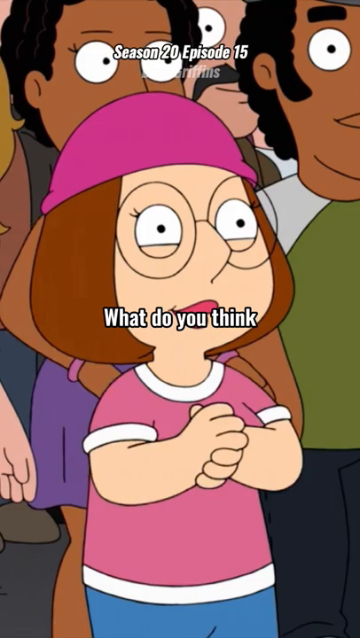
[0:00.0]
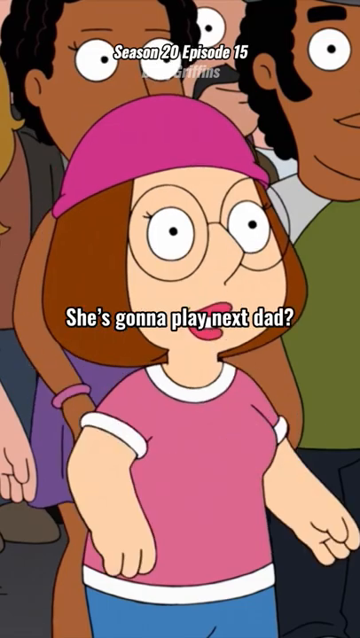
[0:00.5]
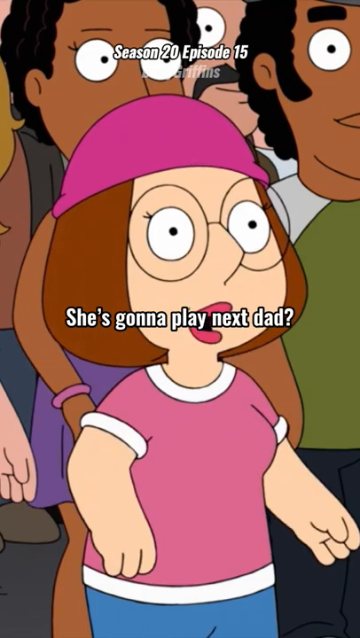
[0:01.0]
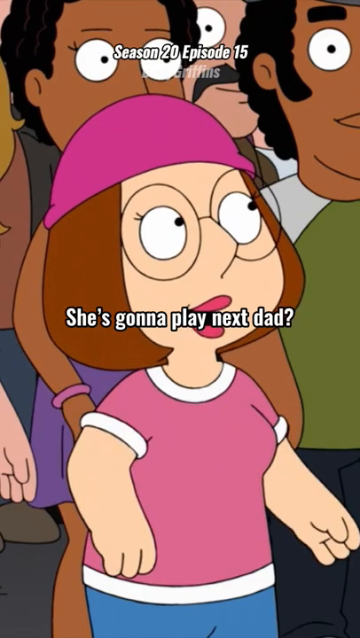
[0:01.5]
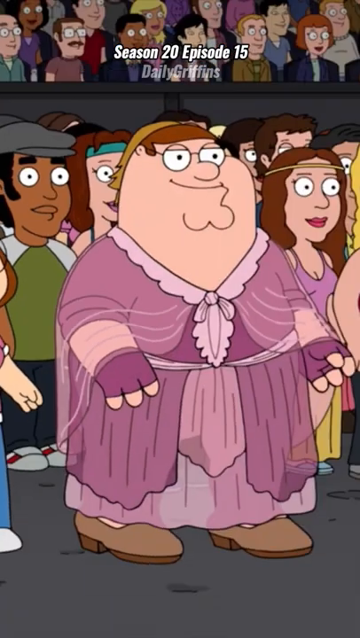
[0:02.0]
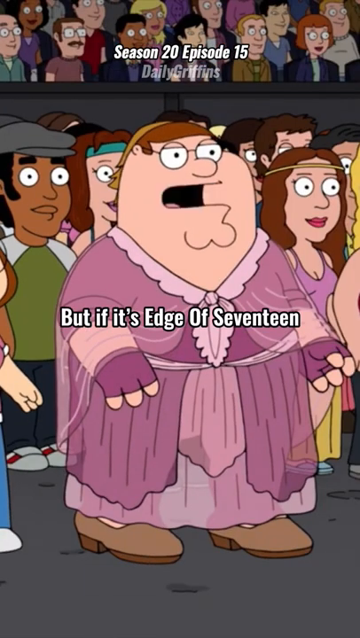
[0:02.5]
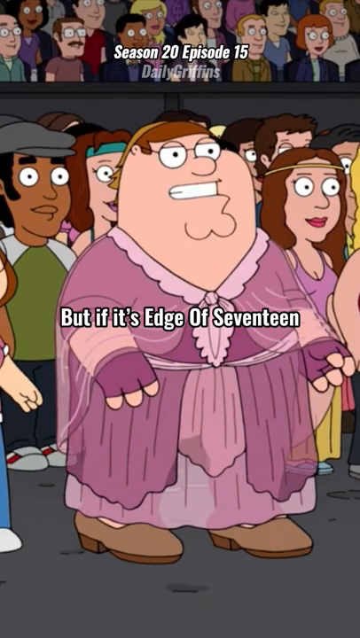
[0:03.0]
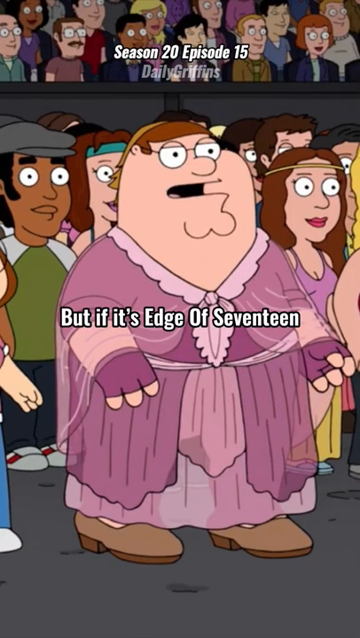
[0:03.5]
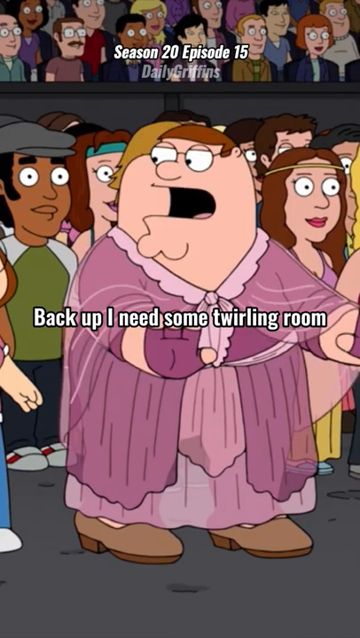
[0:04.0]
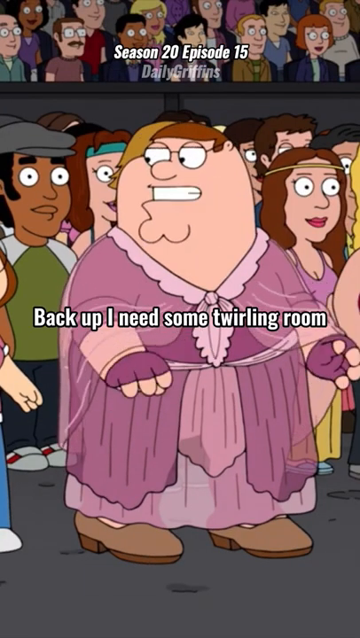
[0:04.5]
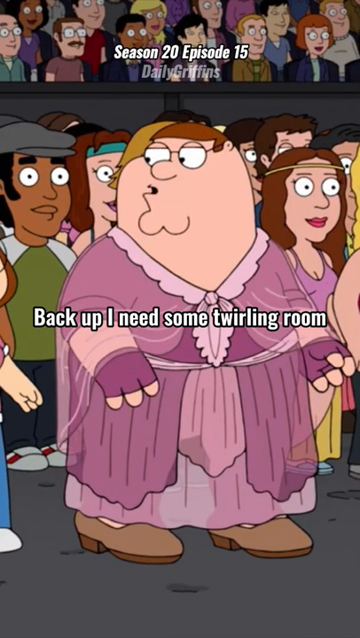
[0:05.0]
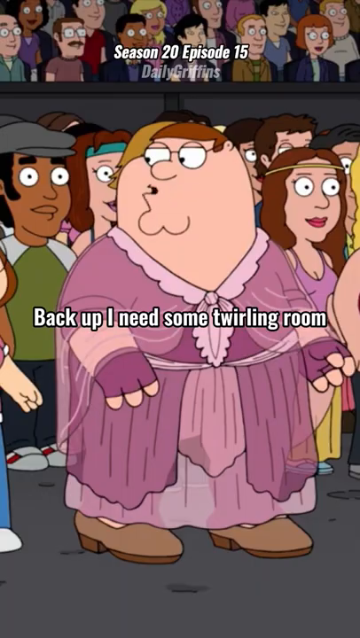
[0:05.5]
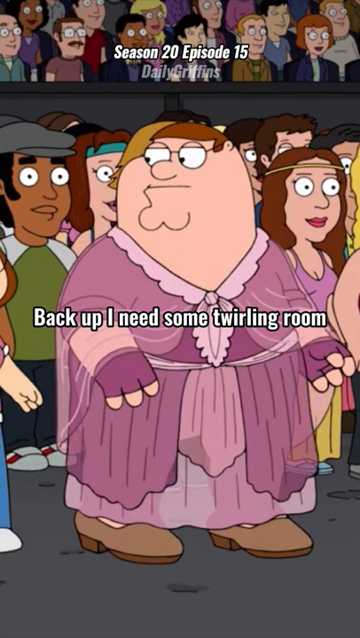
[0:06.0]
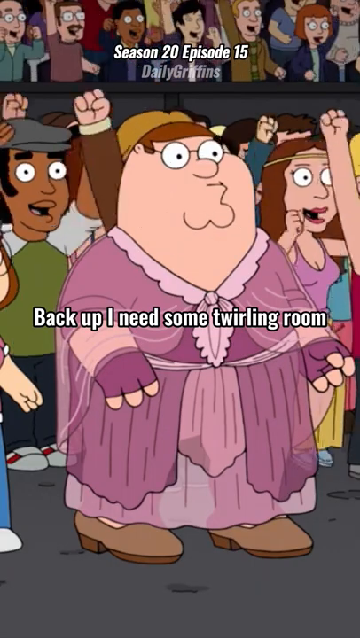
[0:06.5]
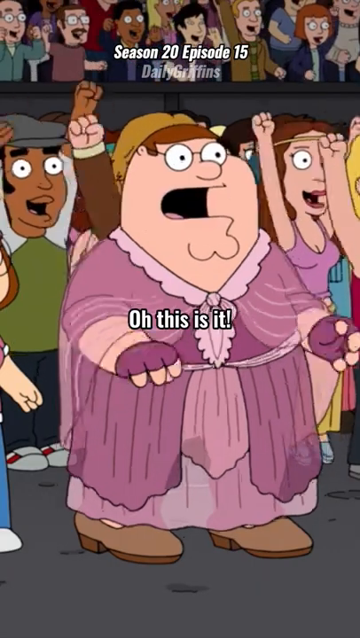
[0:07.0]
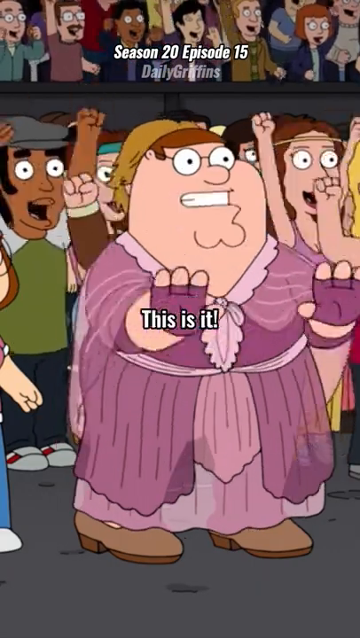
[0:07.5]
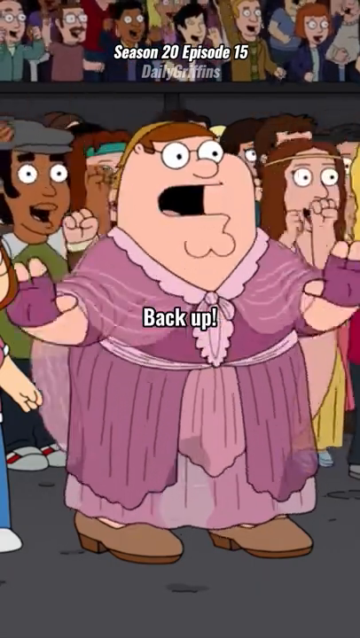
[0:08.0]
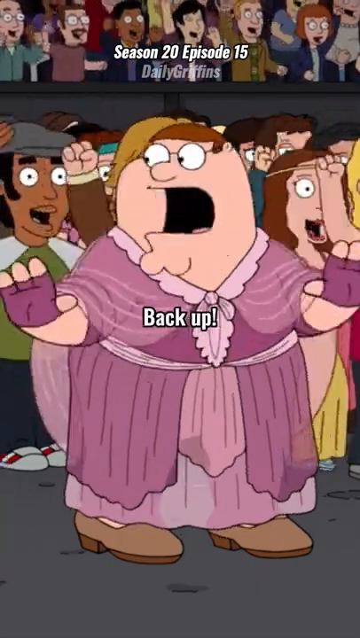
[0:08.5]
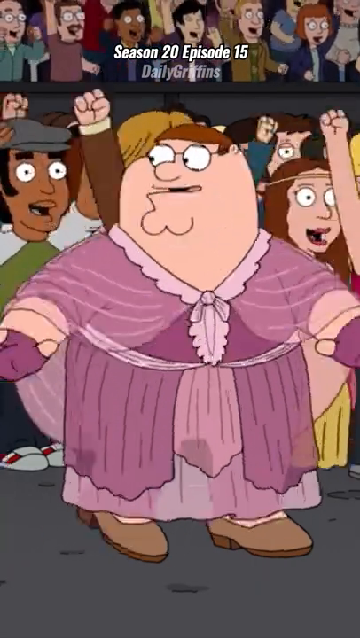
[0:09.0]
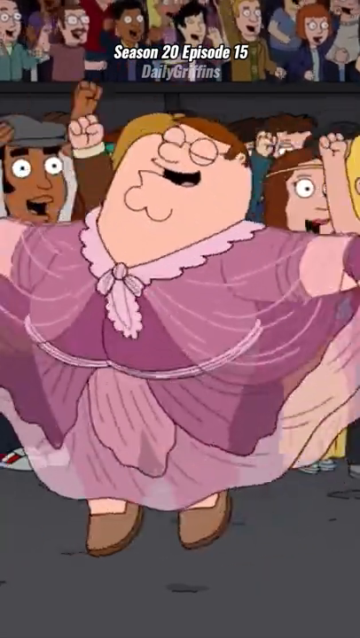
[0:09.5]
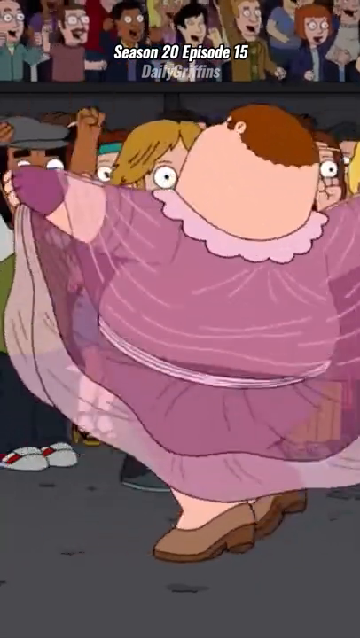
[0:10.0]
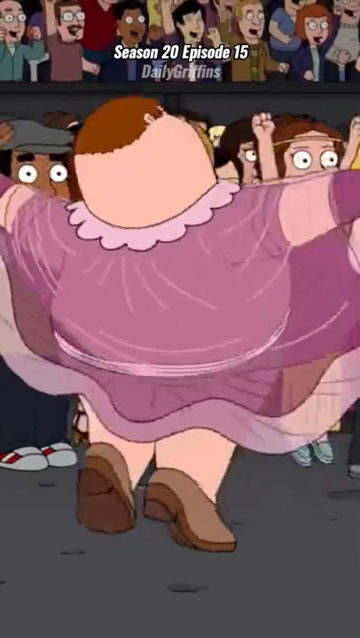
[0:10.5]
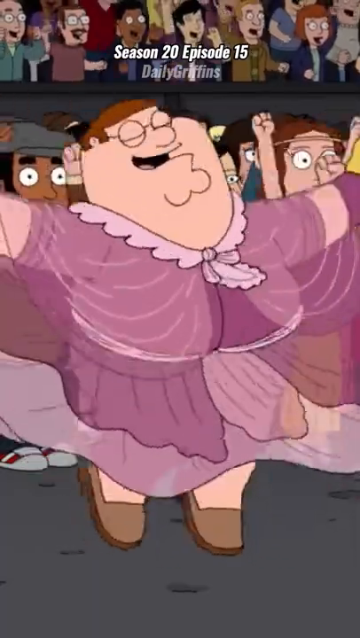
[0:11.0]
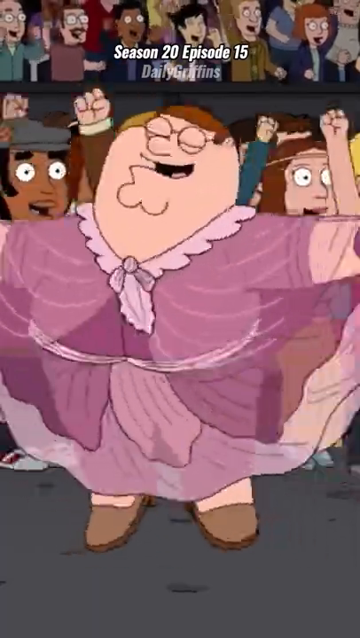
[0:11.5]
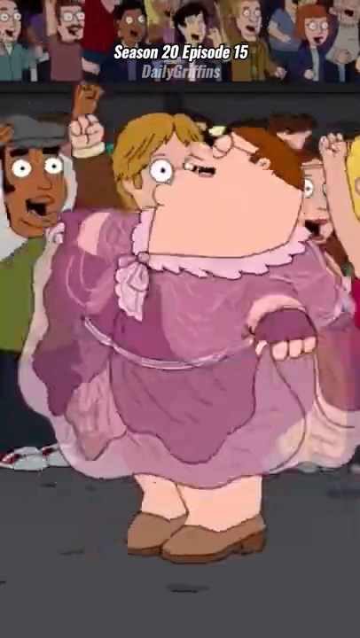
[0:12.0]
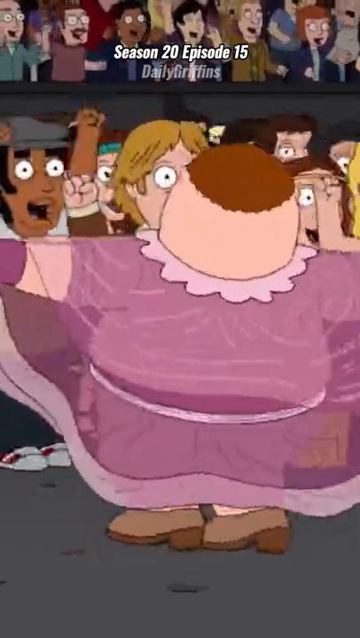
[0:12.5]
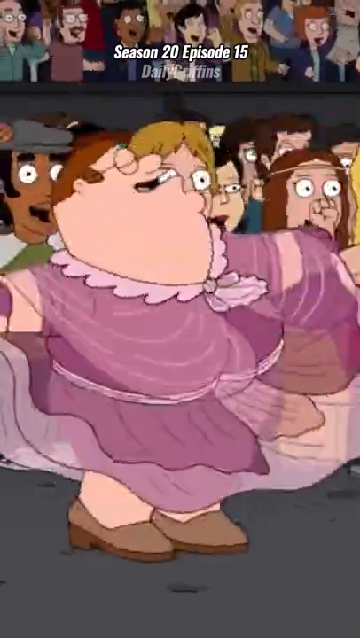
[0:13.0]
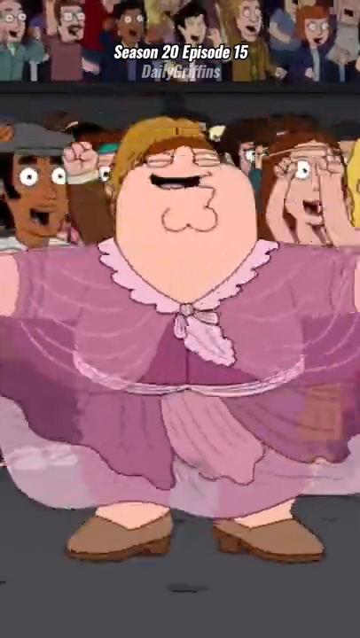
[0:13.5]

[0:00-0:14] Two main characters appear. One appears to be a father, wearing a flowy, bohemian-style fuchsia dress and a pair of low heels. His daughter wears a regular pink t-shirt, blue jeans, white shoes and a pink hat. It looks like they are at a concert. The audience is wearing kind of a similar style to the dad, so the daughter is kind of the odd one out. Judging by the on-screen text, both of them are enthusiastic, and the audience is enthusiastic as well.